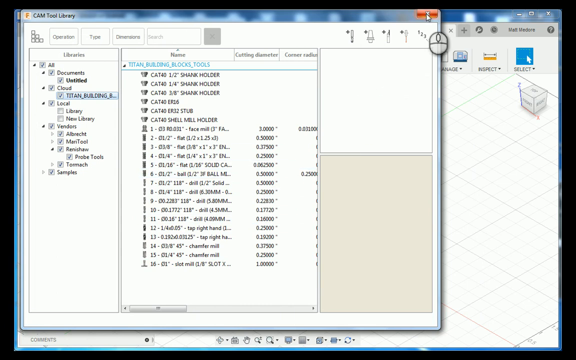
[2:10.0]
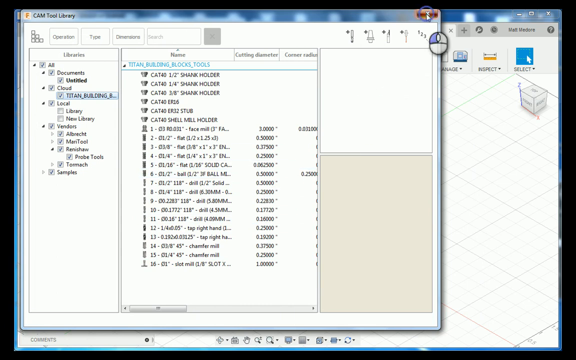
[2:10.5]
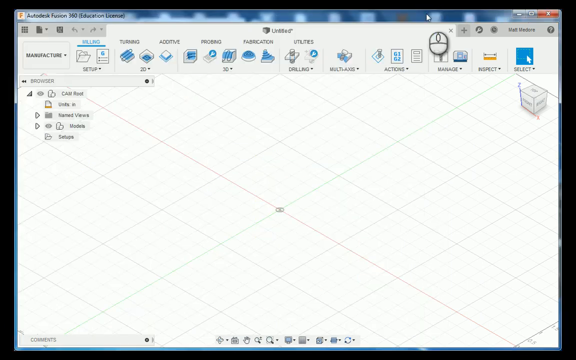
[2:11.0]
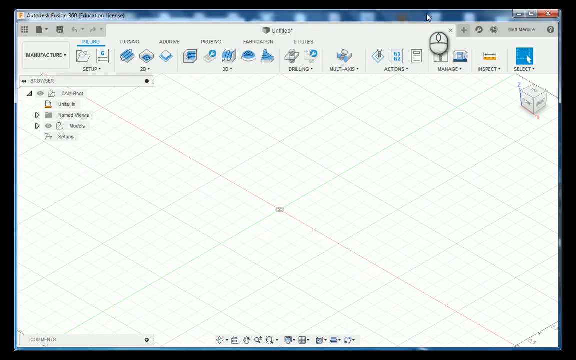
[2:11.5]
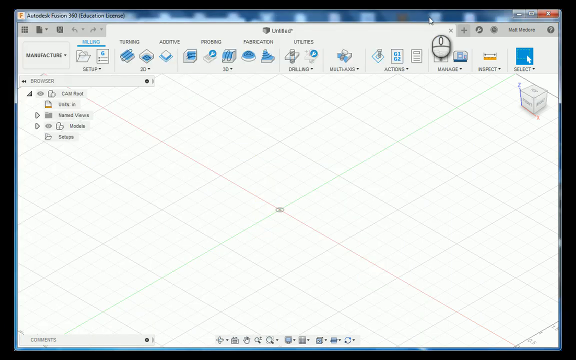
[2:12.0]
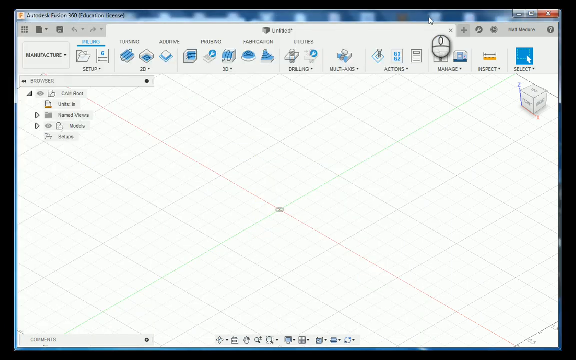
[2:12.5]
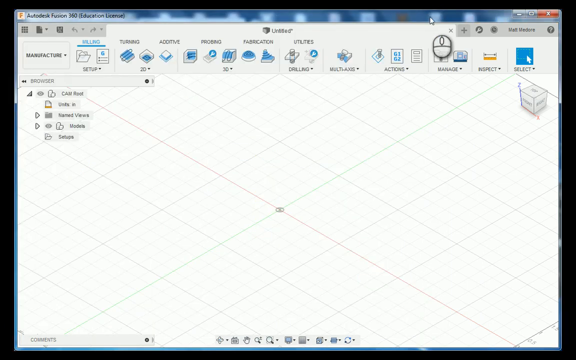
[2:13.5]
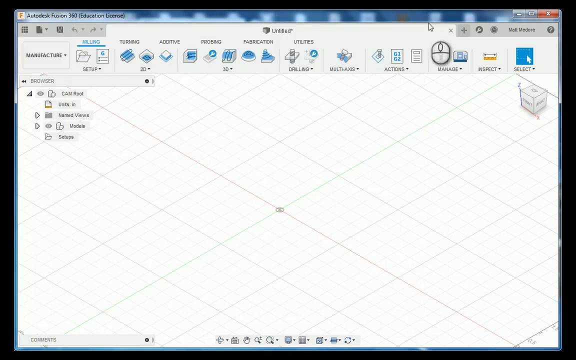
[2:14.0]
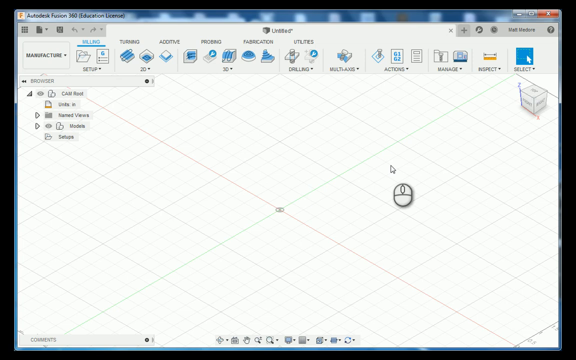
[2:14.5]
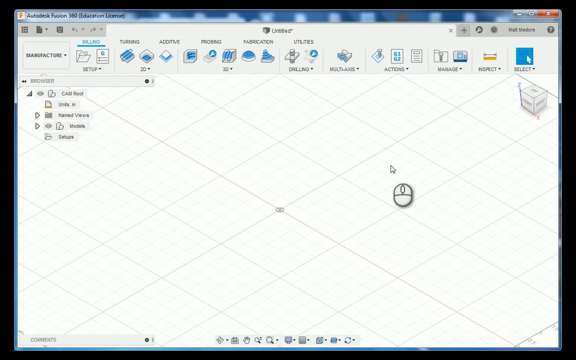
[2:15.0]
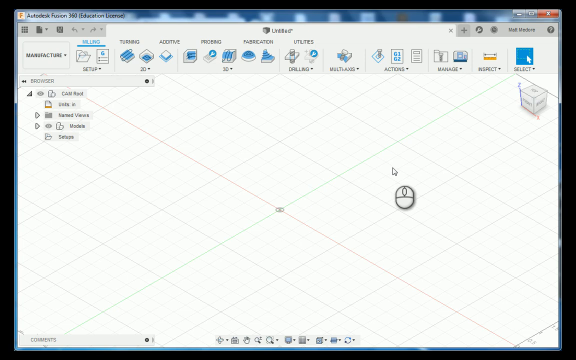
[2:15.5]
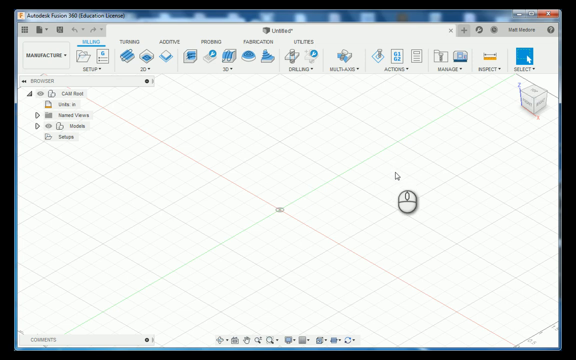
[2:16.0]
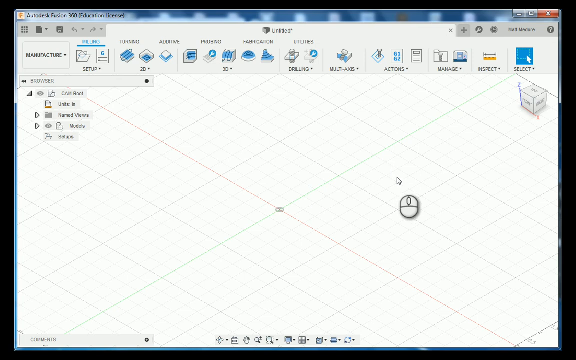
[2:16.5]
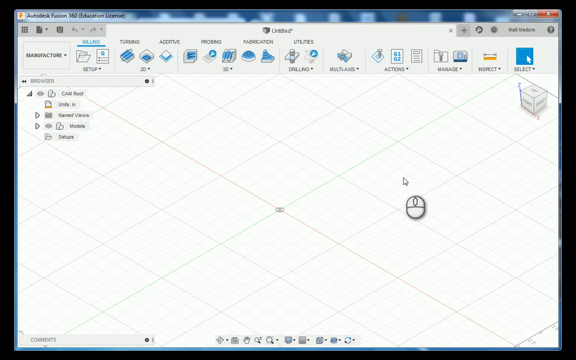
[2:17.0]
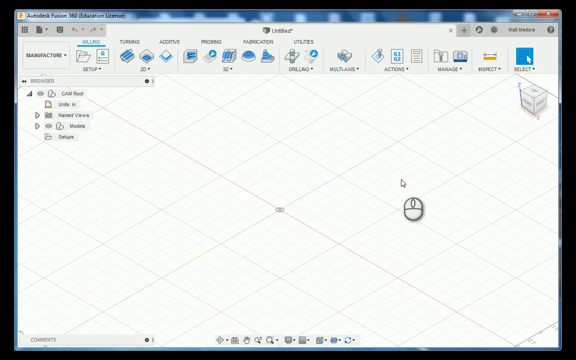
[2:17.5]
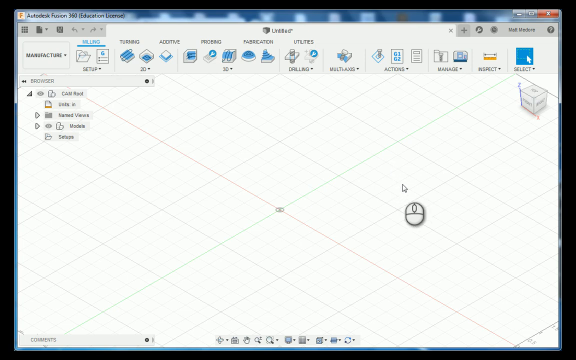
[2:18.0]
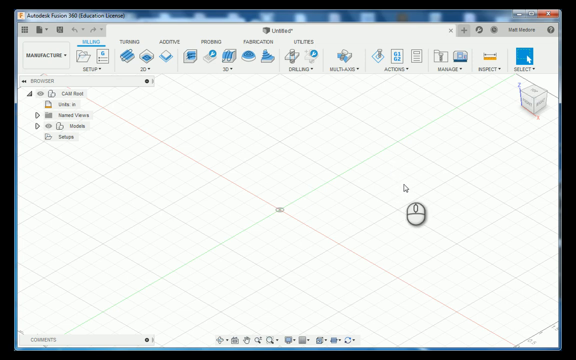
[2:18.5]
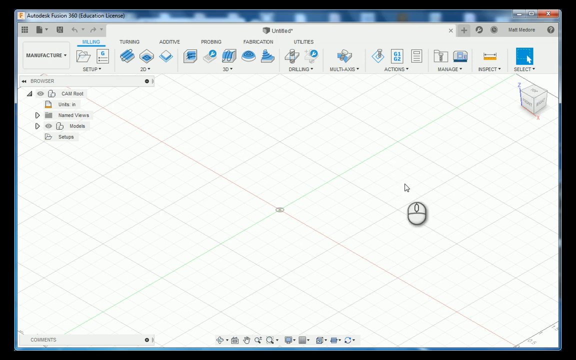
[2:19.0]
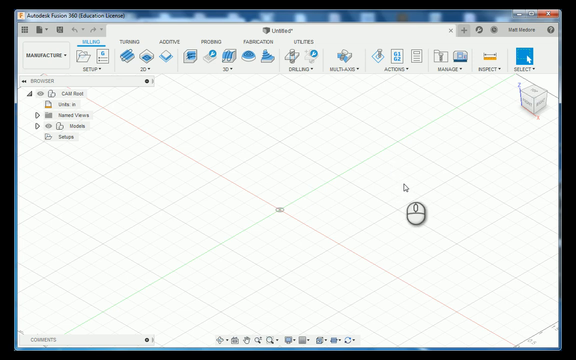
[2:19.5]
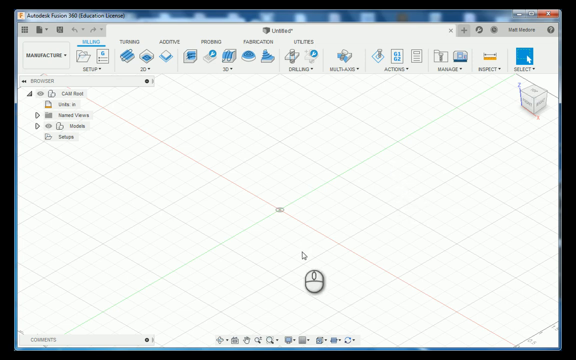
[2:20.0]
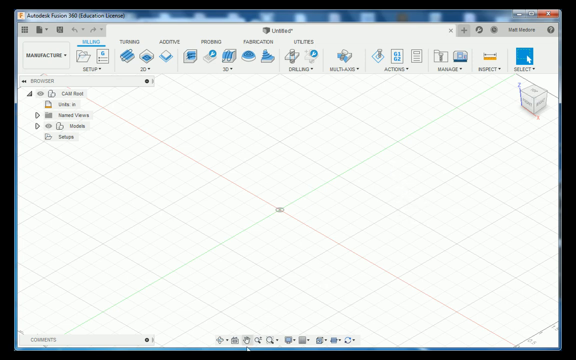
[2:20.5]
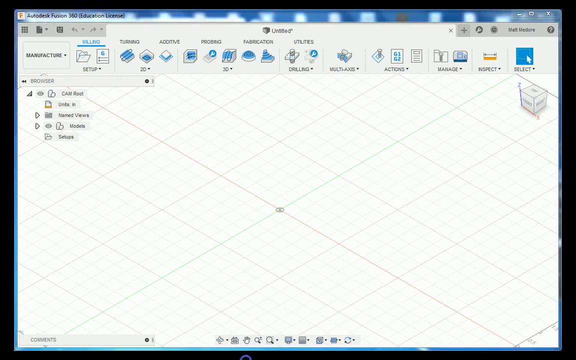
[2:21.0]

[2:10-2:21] In a modeling program, a sub-window reading "CAMTool Library" is open, displaying various file paths, libraries and folders, with the "Titan_building_blocks_tools" folder selected. The mouse cursor moves to the red X at the top right of the window and clicks it, closing the window. The cursor then moves to the grid panel in the main part of the window, which has various buttons along the top of the UI and is titled Autodesk Fusion 360, showing an education license. The mouse moves to the grid, then further down and off the screen, where the pointer disappears. A click follows, and the video ends.